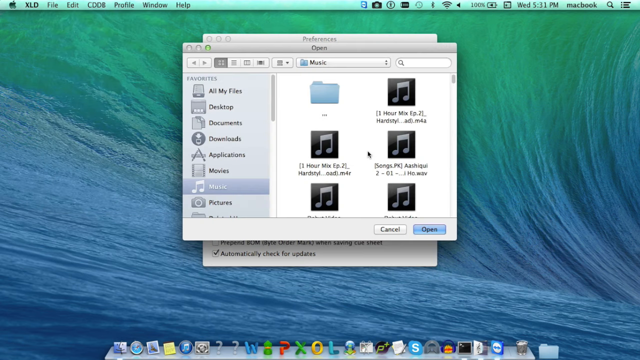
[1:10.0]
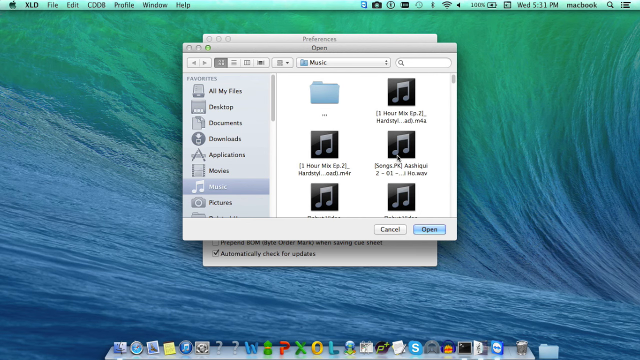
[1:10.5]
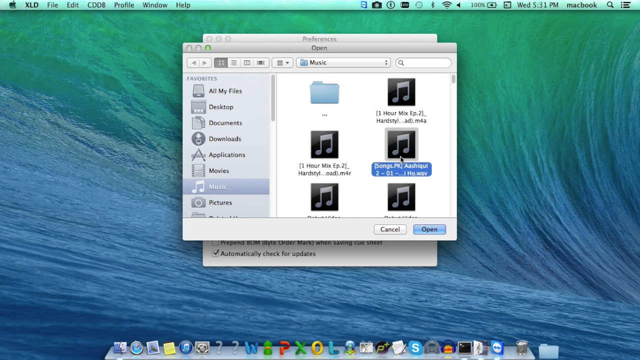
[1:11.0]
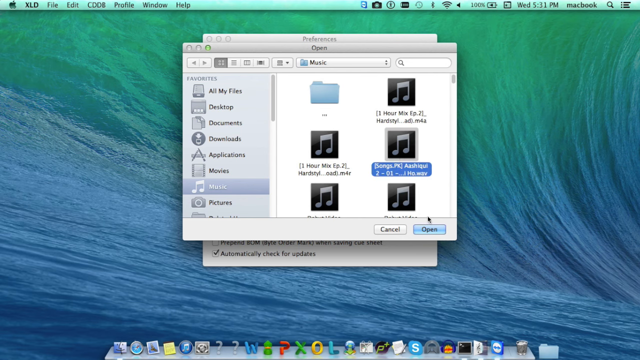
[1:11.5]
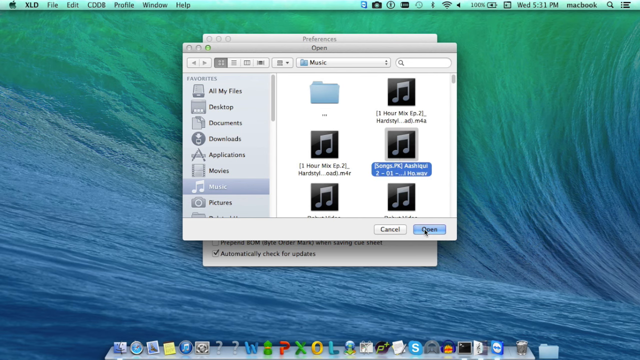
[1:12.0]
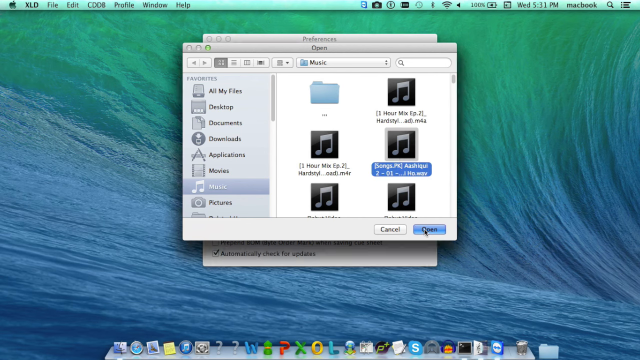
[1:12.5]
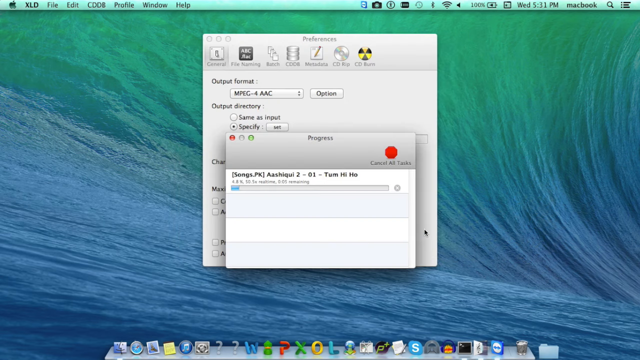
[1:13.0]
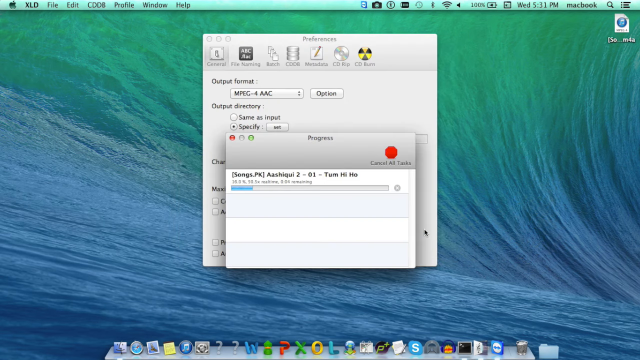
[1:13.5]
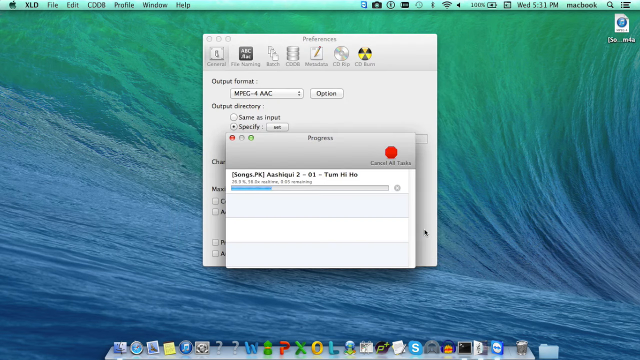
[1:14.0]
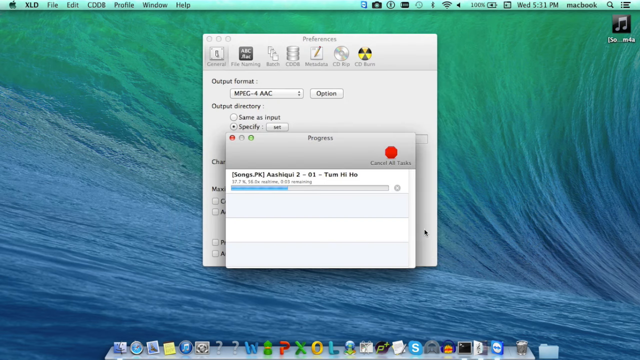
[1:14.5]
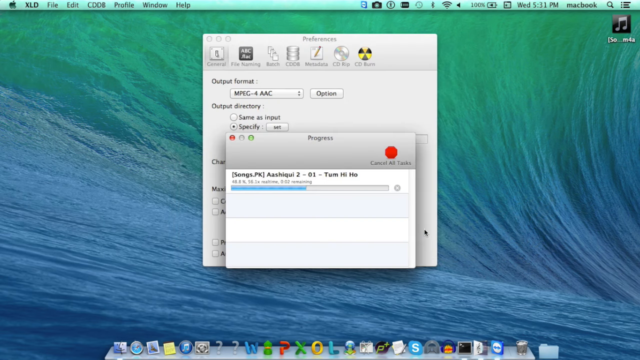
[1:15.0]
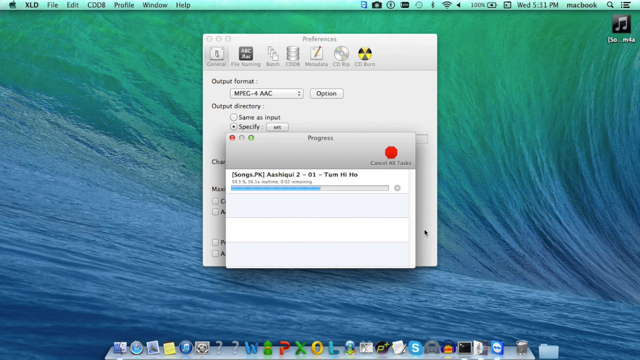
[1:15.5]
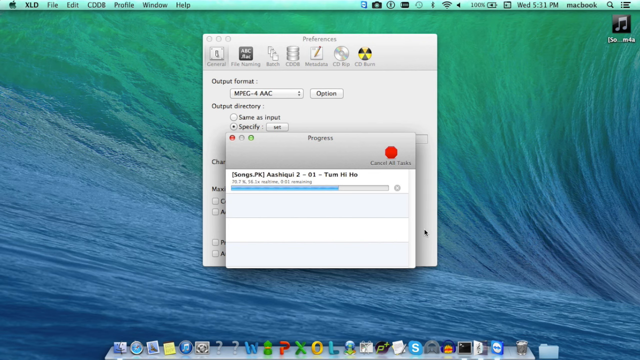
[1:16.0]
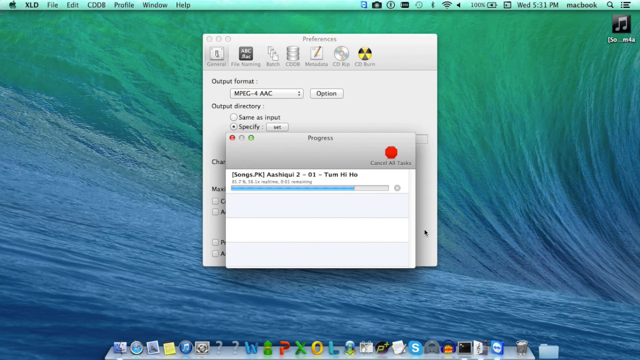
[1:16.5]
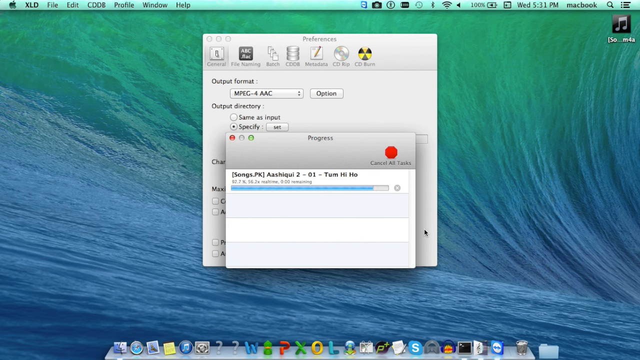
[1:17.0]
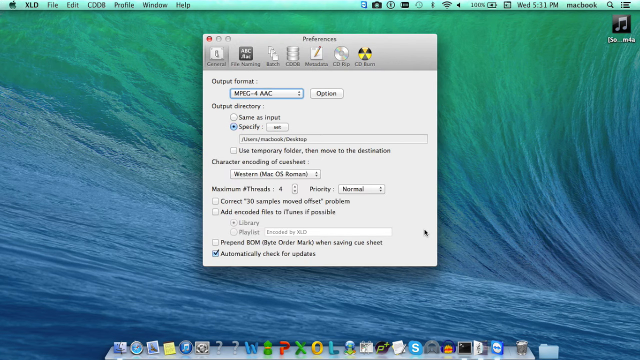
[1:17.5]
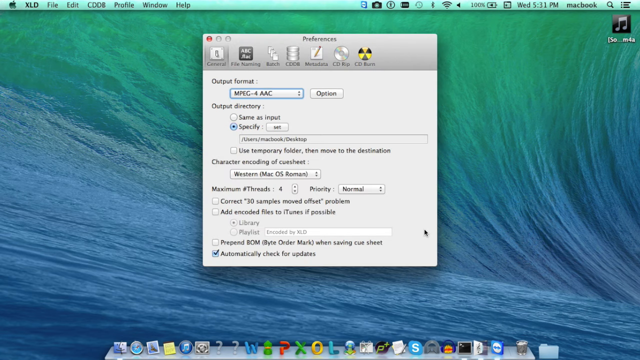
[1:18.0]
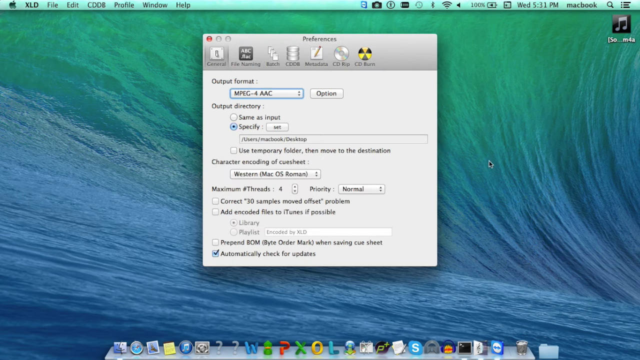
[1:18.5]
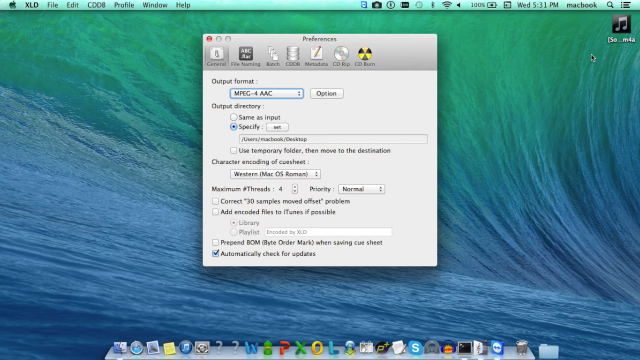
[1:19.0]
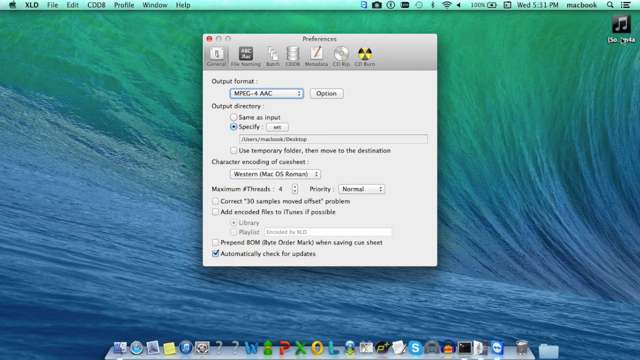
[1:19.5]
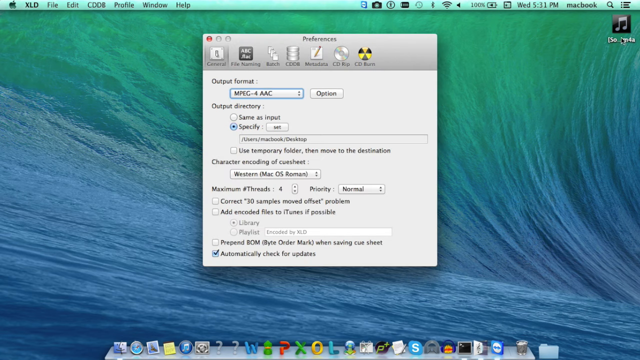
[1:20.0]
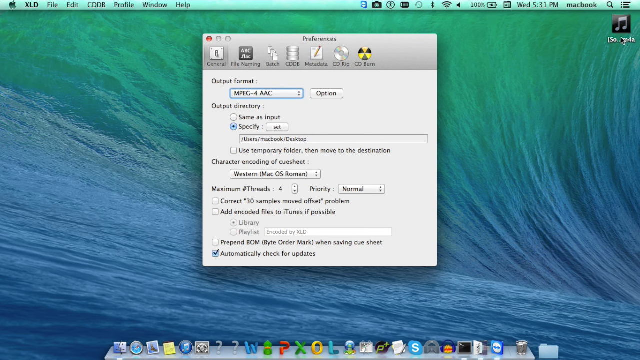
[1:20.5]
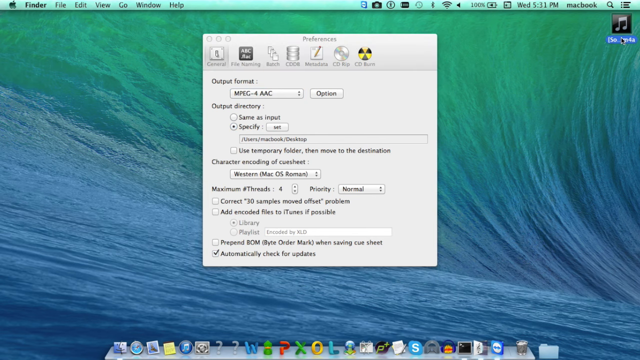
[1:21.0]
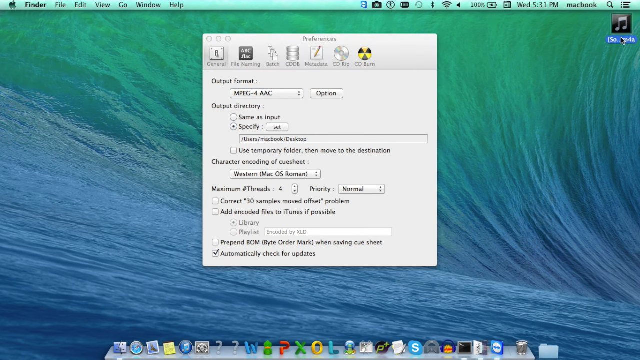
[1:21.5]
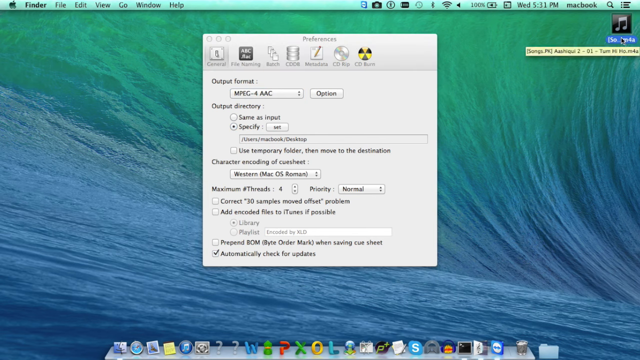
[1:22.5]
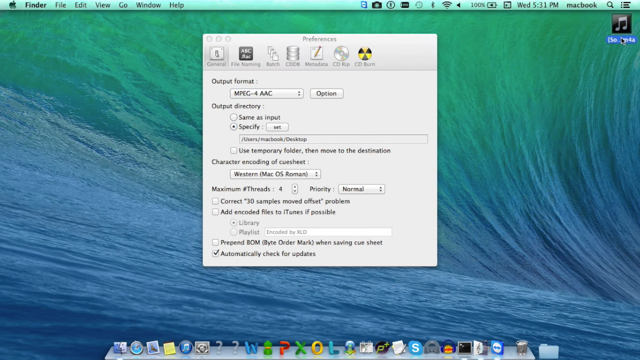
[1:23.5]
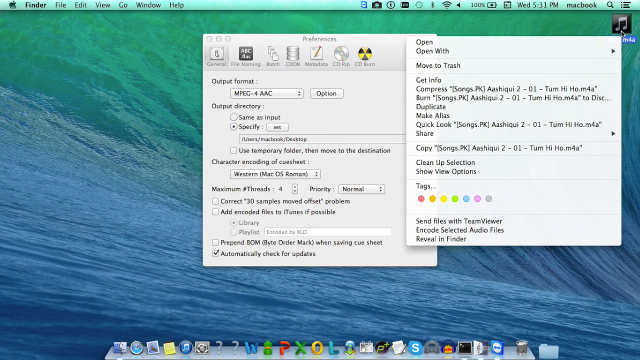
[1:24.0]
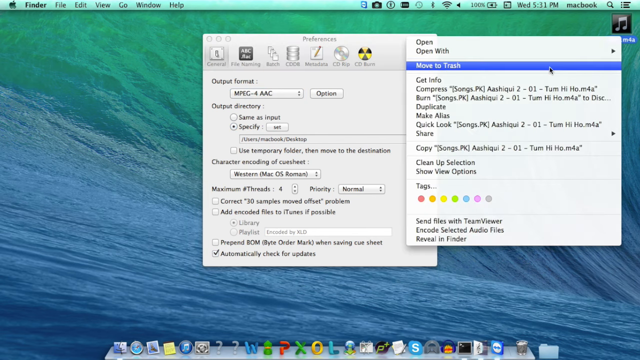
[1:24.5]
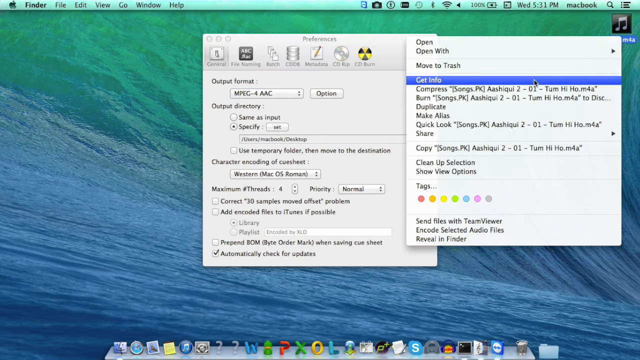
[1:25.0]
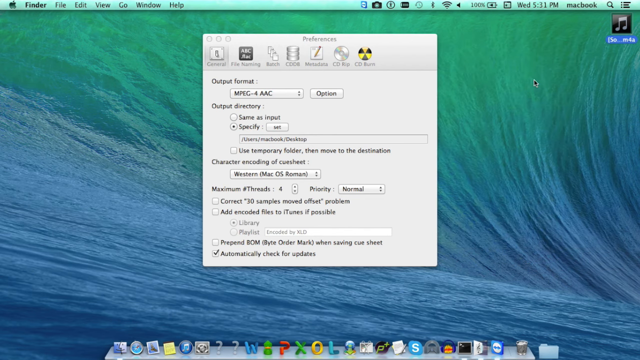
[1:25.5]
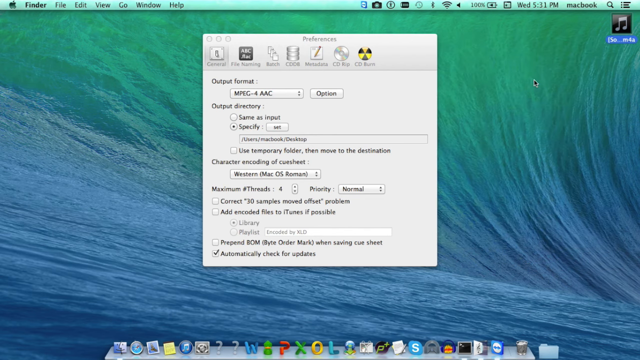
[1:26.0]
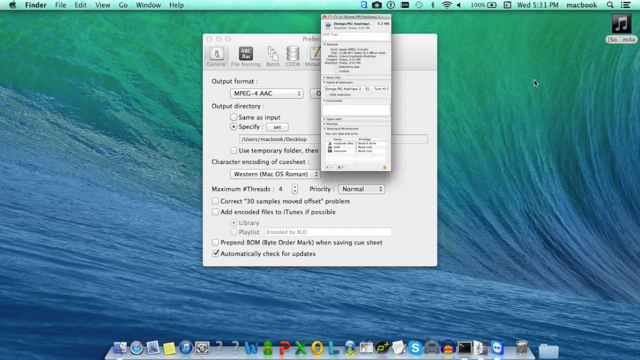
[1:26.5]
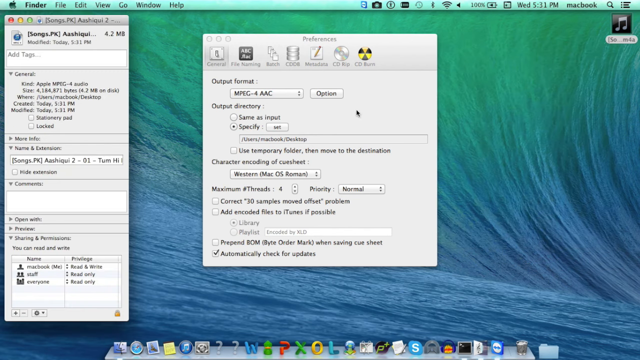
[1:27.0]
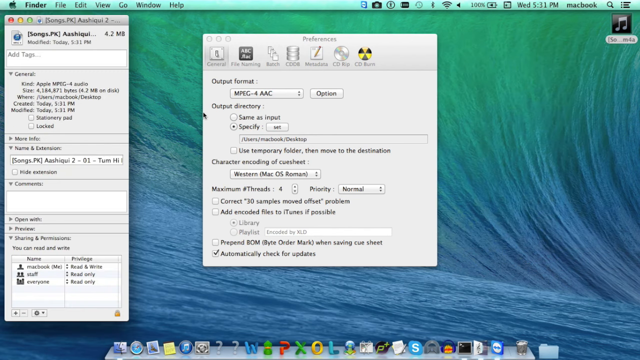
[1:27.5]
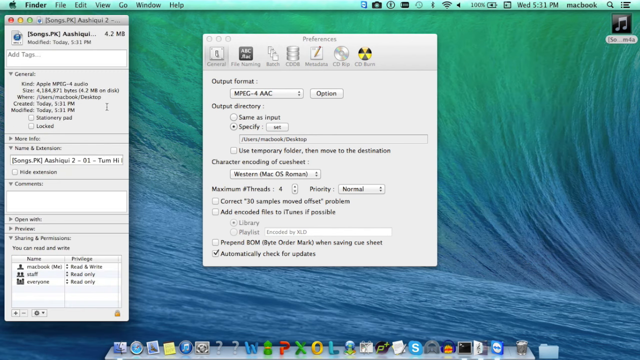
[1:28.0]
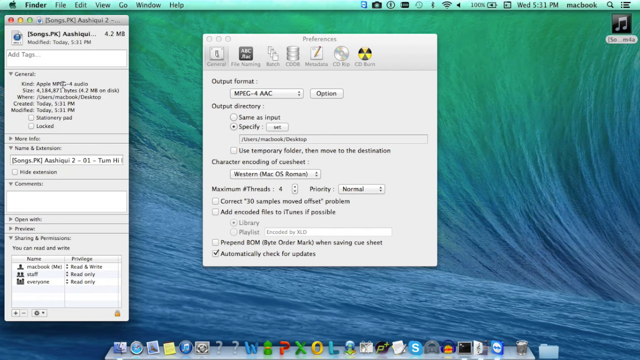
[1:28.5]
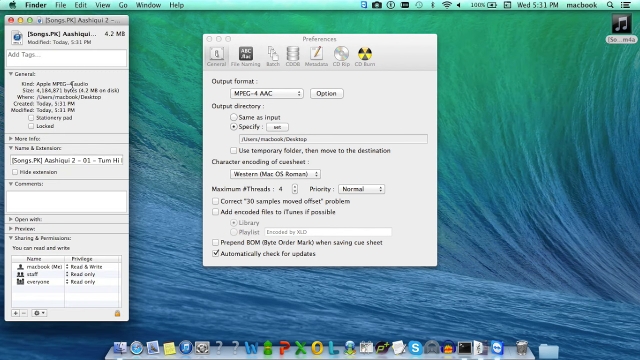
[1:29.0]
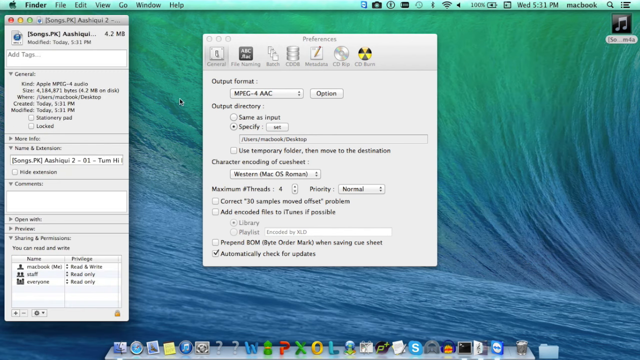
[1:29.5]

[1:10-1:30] From the open-file screen, a photo is opened and a progress bar appears, with blue scrolling across as it loads. A file then opens on the canvas. It apparently looks at the properties of the file and goes to copy it, then moves it to the desktop of the Mac. It looks like a right-click on the file brings up options, and Get Info is selected to show info or metadata on the file. The shot ends with Get Info on the left-hand side of the screen on the older MacBook desktop.